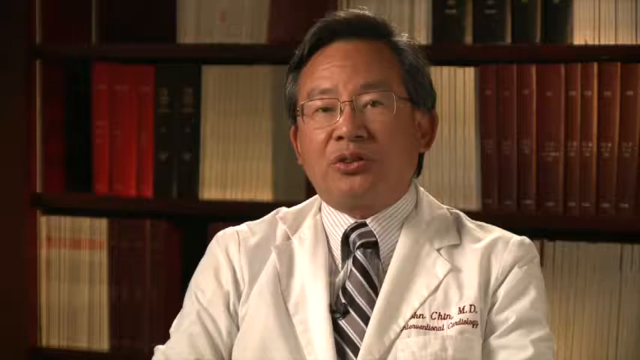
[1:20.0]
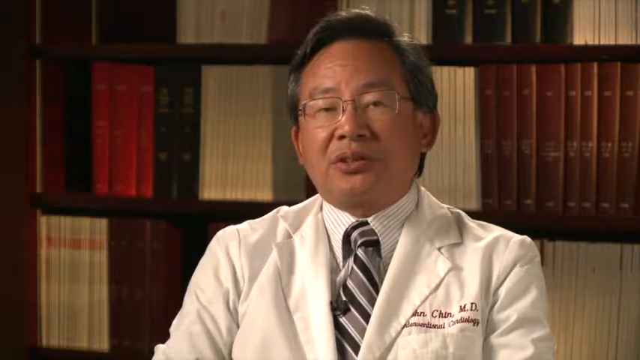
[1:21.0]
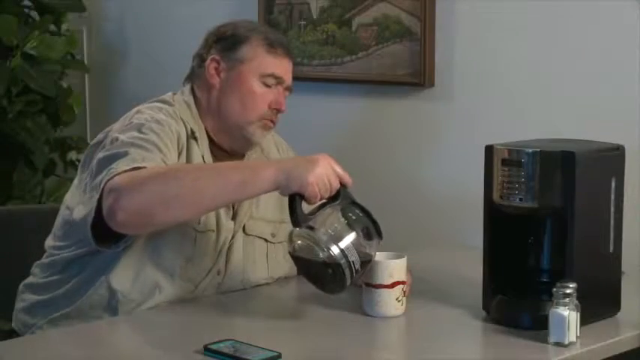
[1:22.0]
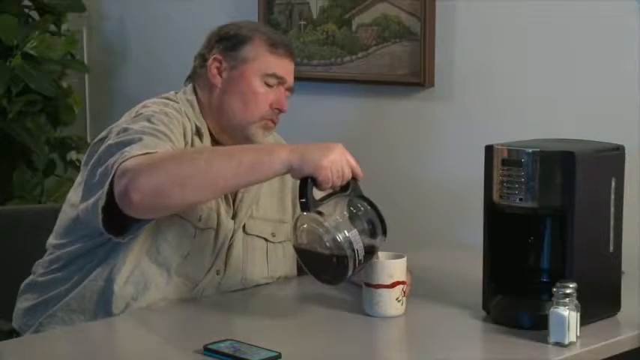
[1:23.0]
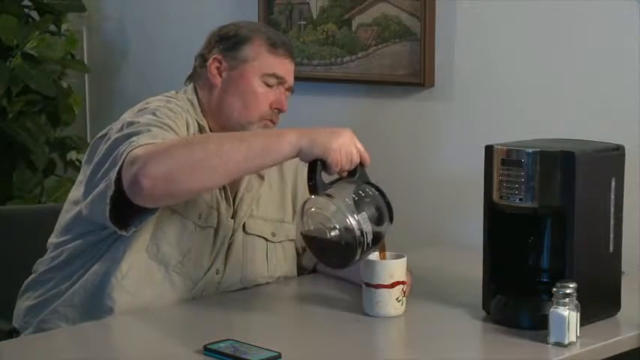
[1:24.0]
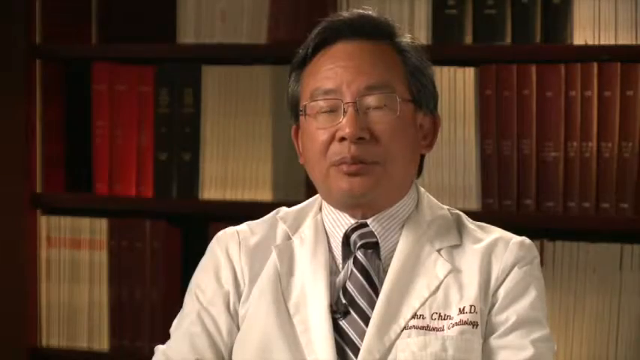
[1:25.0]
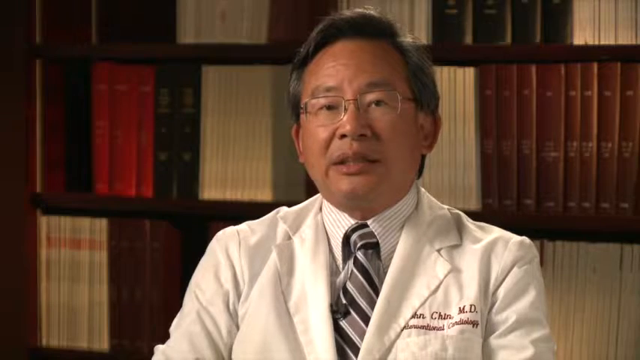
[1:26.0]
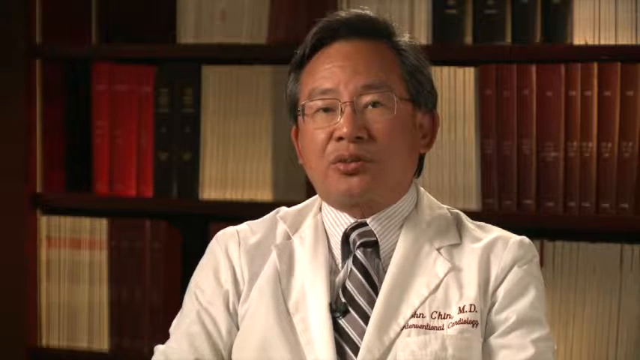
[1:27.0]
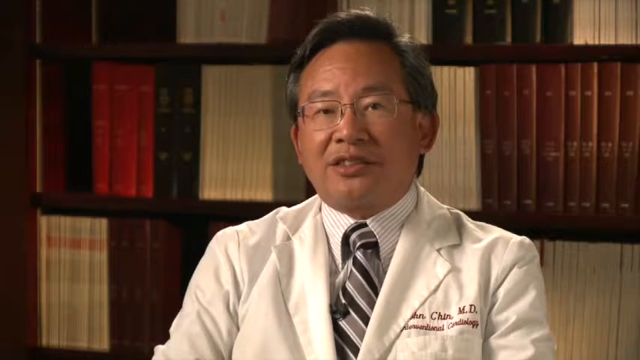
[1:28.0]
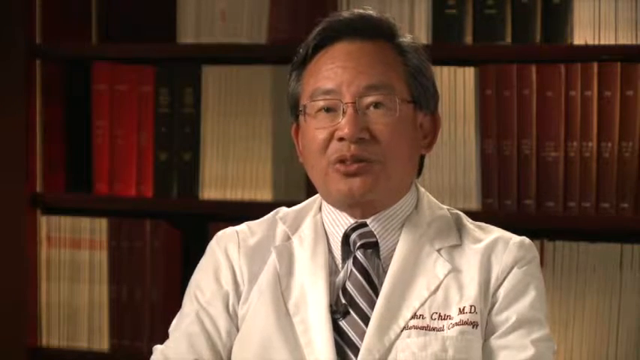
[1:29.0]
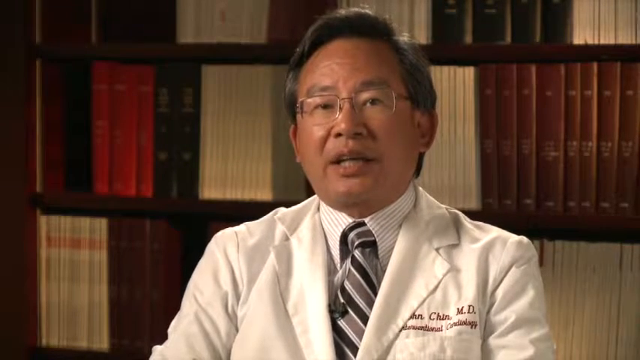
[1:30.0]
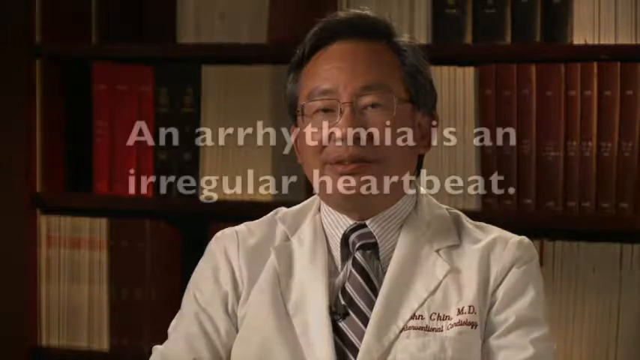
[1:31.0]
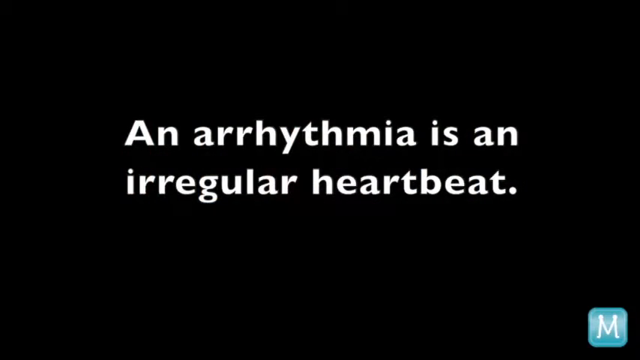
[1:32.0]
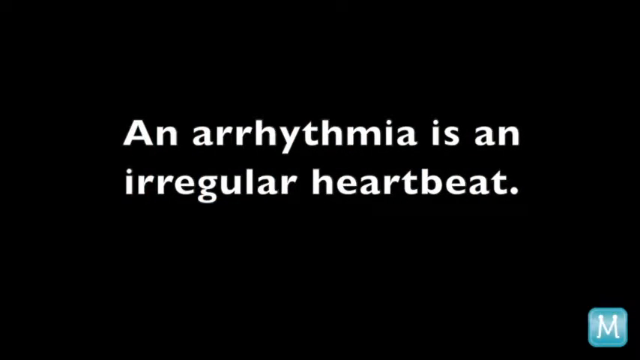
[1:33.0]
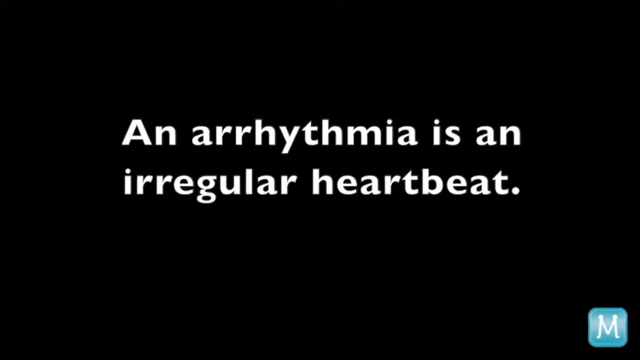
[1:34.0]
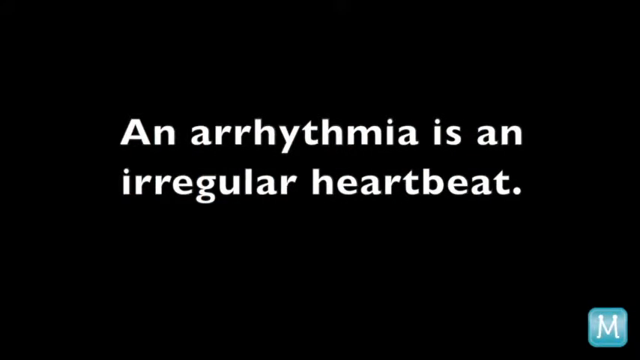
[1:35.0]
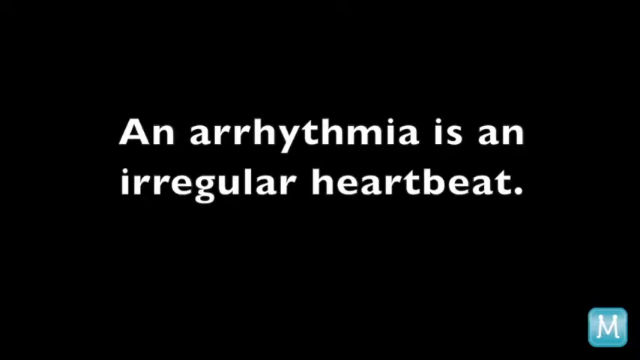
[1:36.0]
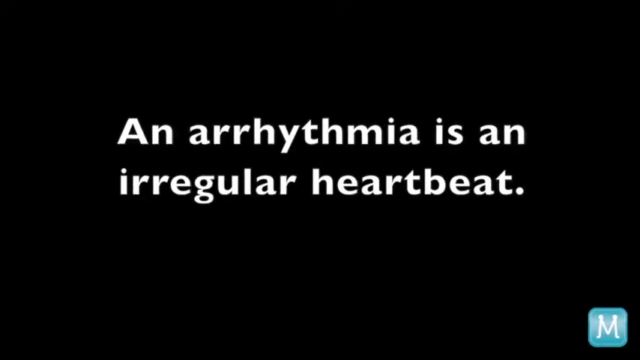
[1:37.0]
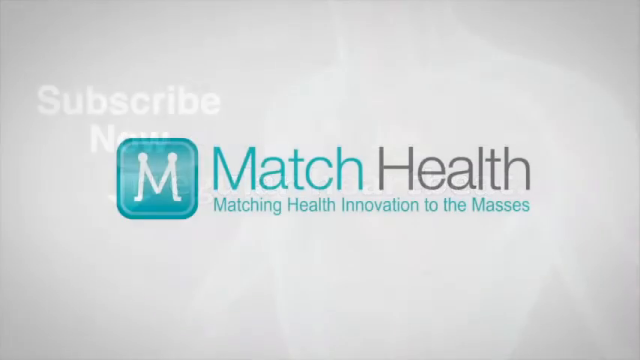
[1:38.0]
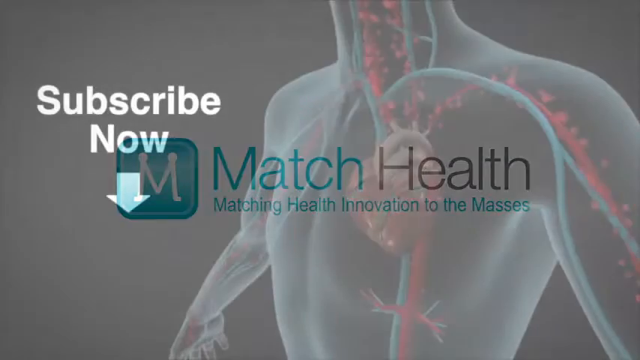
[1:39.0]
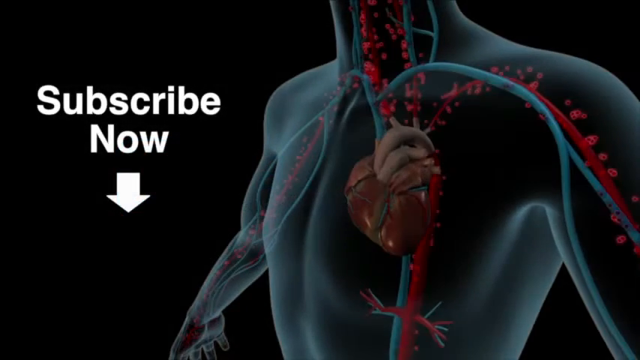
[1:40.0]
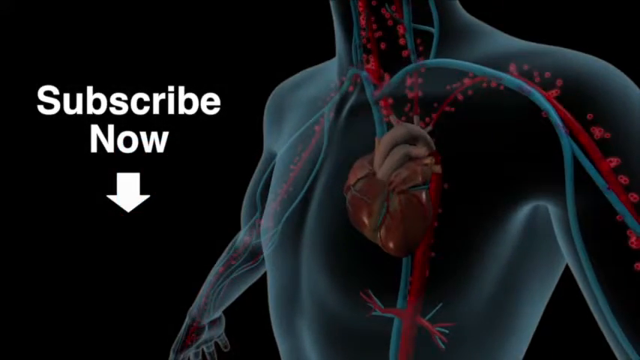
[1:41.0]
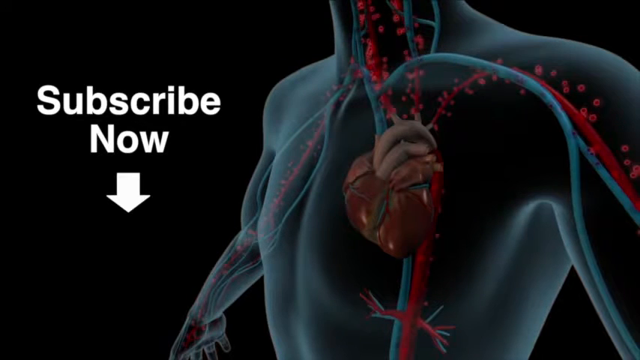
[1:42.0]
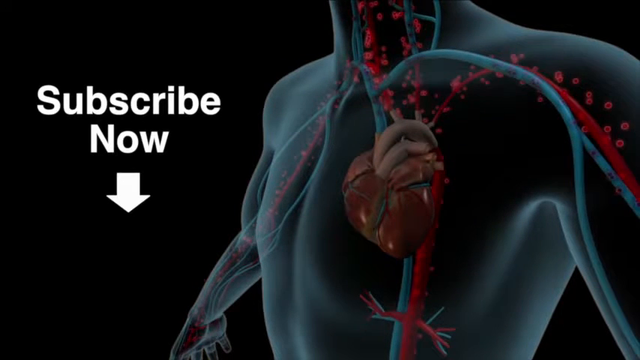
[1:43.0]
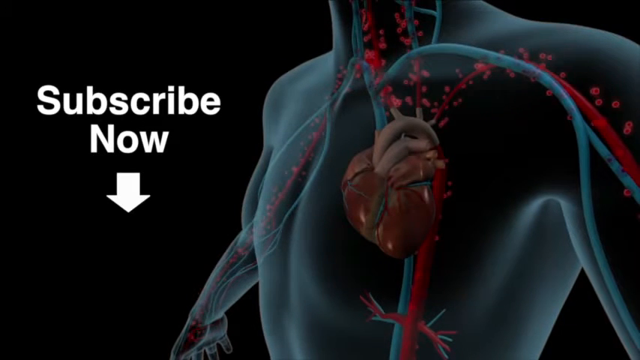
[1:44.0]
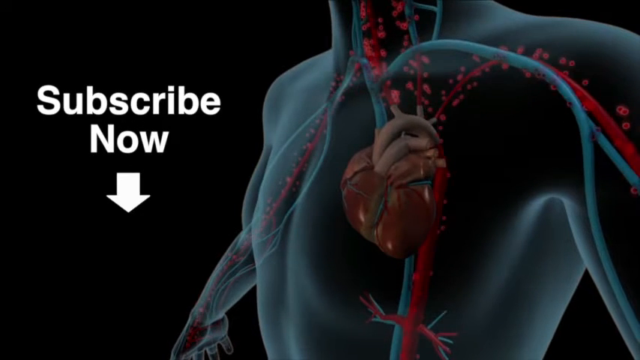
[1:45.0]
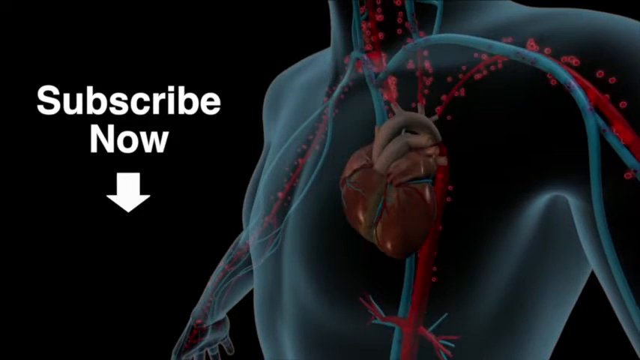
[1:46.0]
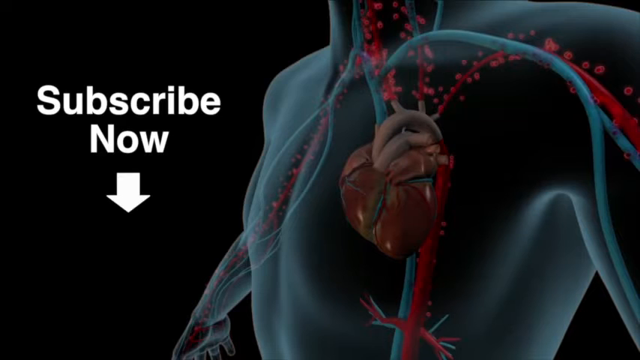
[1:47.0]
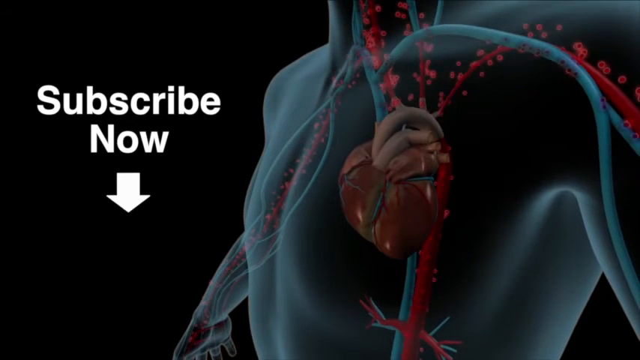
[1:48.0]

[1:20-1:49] A doctor is sitting in a room with bookcases behind him, visible only from the shoulders up. He wears the traditional white lab coat, a black and grey striped tie and glasses, and sits facing the camera, speaking. After a second, this fades to an image of a man sitting at a counter, facing the right-hand side of the screen. In his right hand is a coffee pot and in his left a white coffee mug; he lifts the coffee pot up to pour coffee into the mug. The doctor is then seen speaking again. This fades out to a black screen with white writing that reads "an arrhythmia is an irregular heartbeat." The final view is a screen with the Match Health logo, a blue square with an M inside it, and across the center it reads "Match Health, Matching Health Innovations to the Masses."